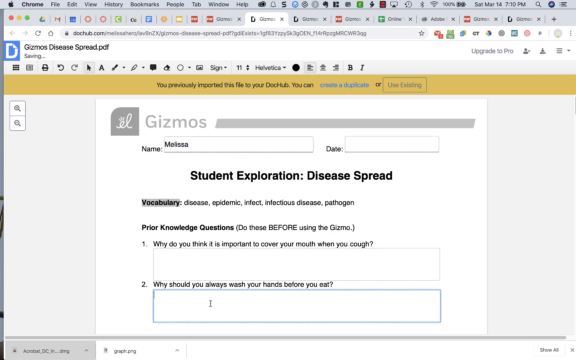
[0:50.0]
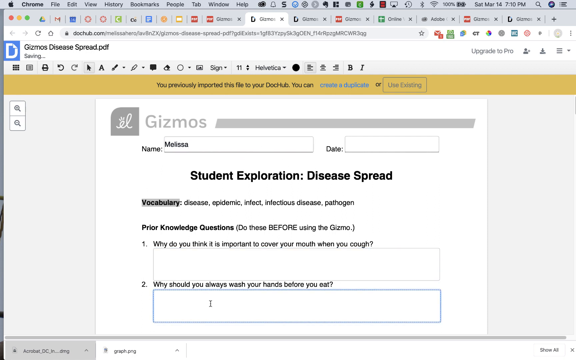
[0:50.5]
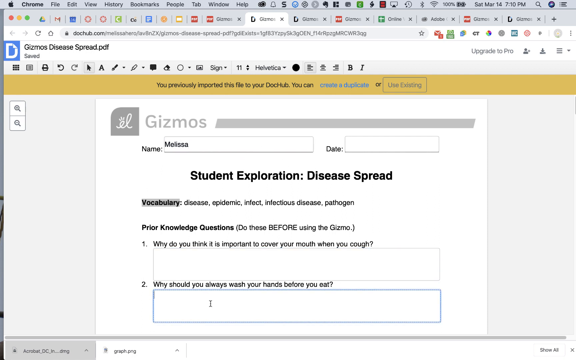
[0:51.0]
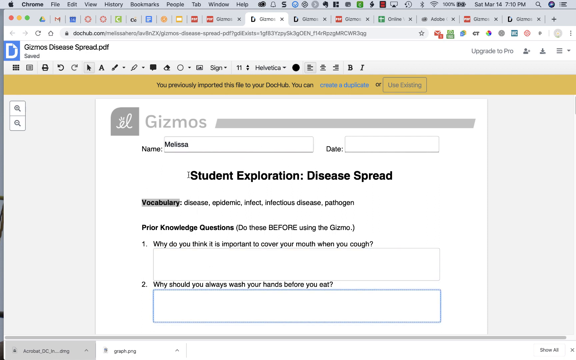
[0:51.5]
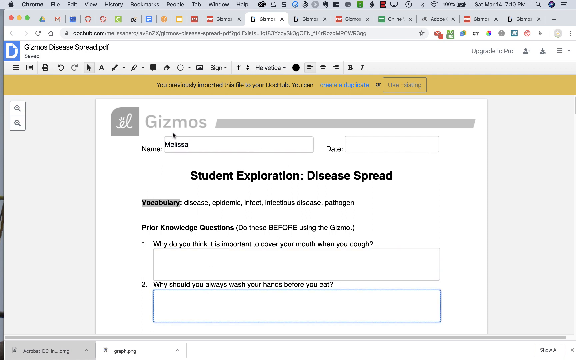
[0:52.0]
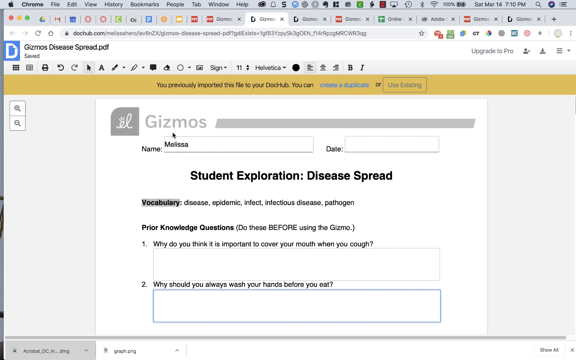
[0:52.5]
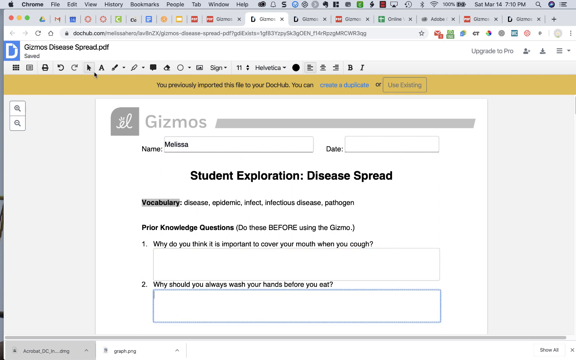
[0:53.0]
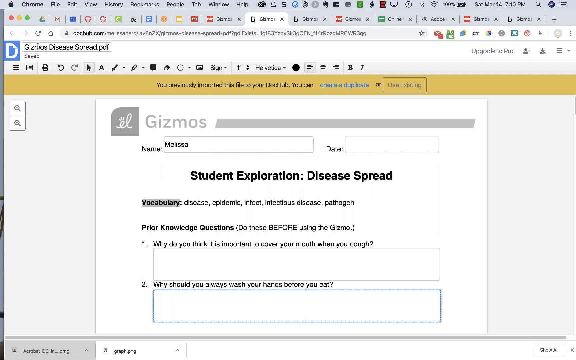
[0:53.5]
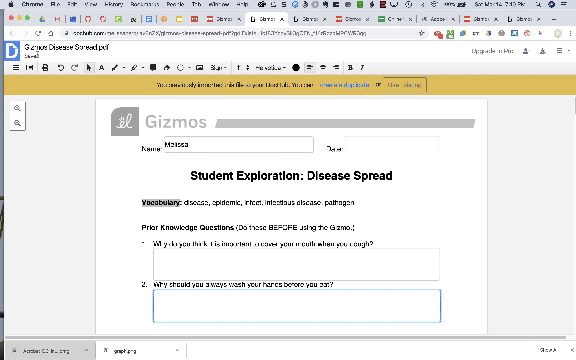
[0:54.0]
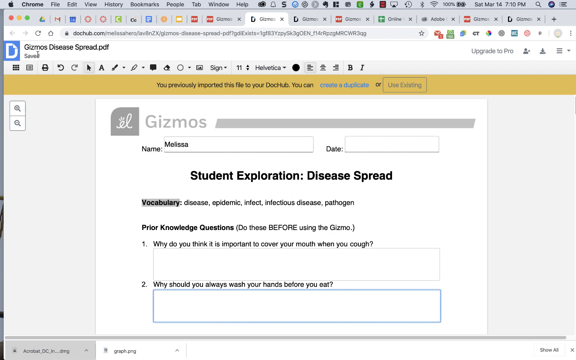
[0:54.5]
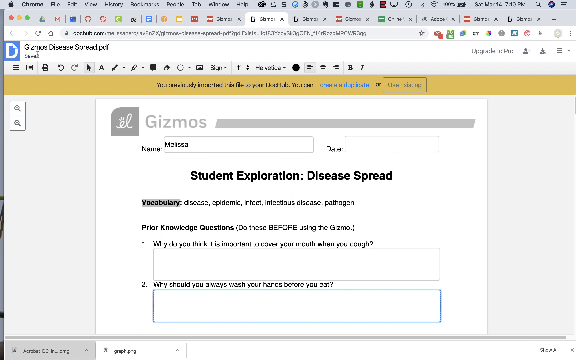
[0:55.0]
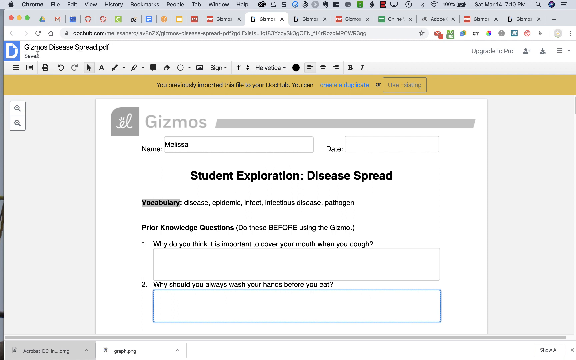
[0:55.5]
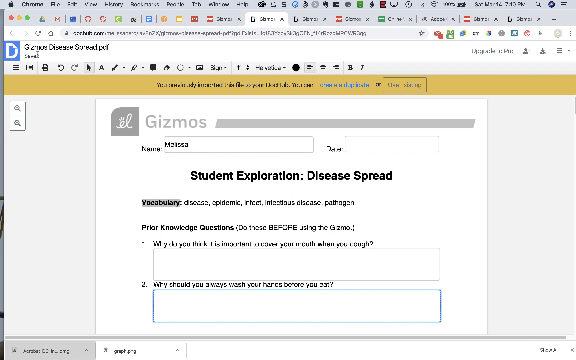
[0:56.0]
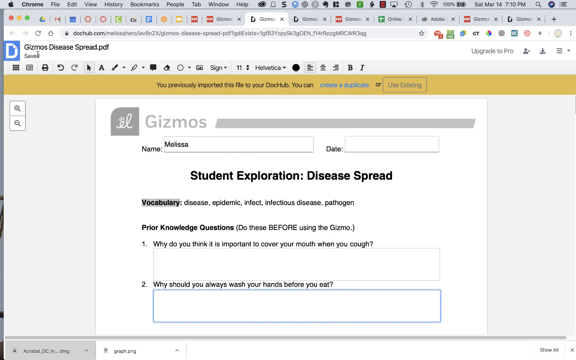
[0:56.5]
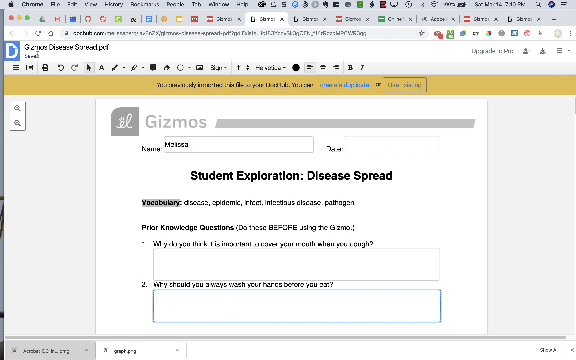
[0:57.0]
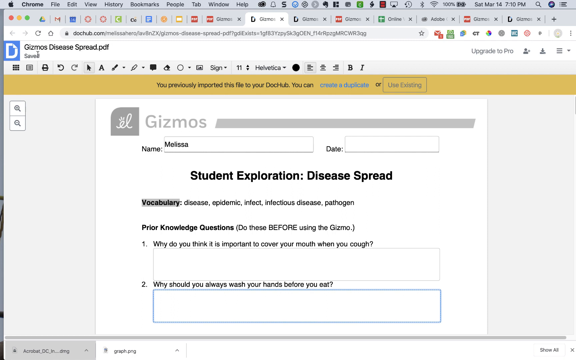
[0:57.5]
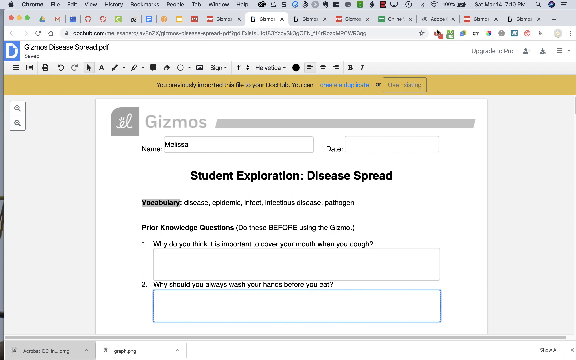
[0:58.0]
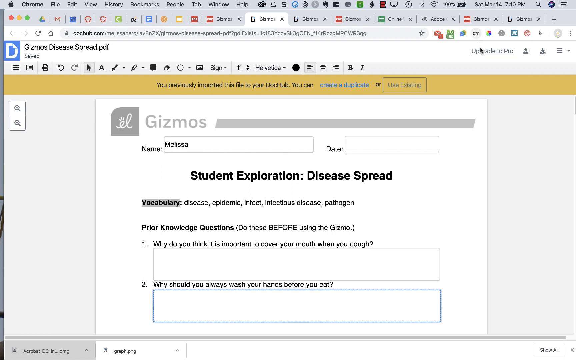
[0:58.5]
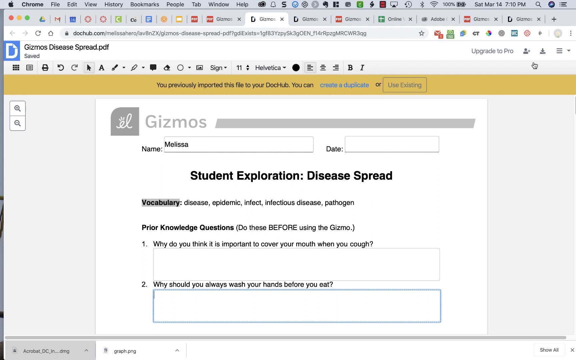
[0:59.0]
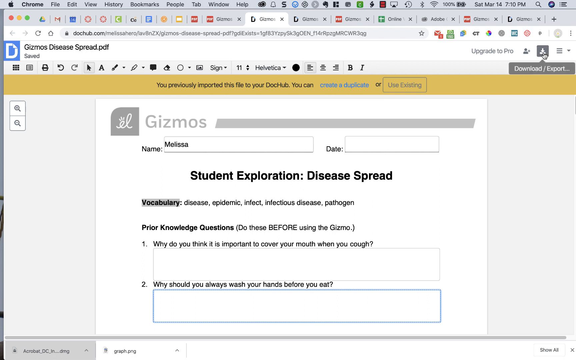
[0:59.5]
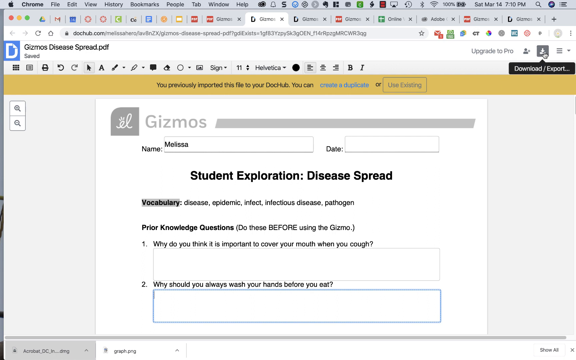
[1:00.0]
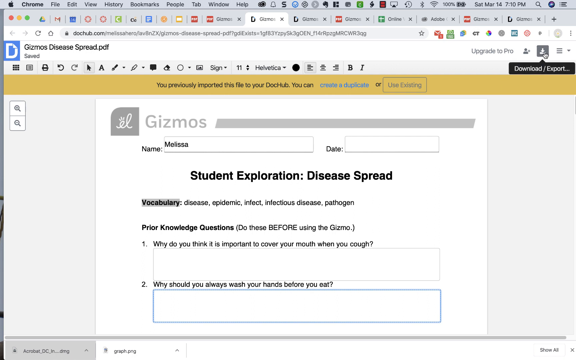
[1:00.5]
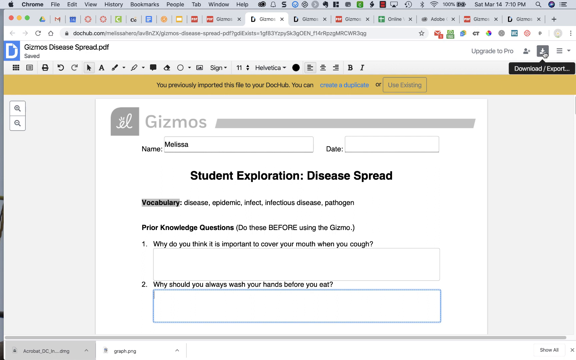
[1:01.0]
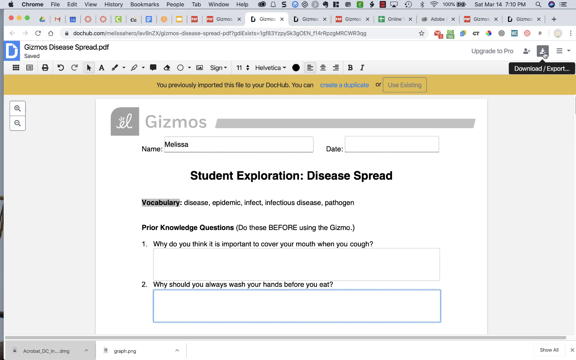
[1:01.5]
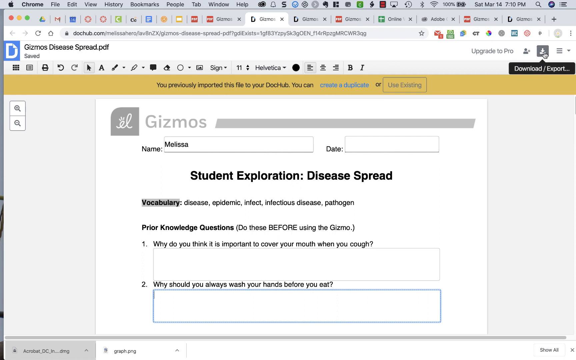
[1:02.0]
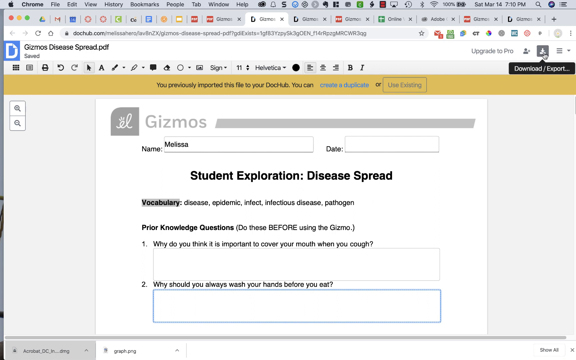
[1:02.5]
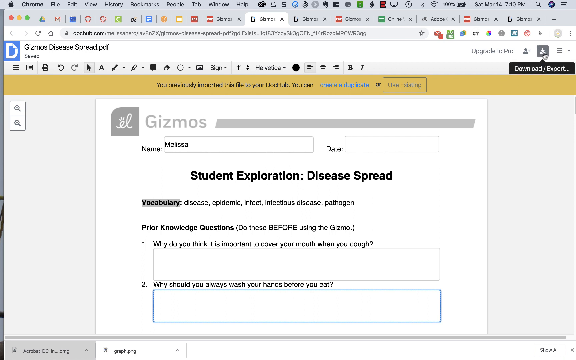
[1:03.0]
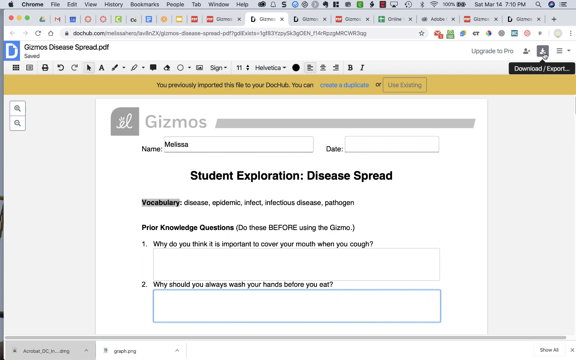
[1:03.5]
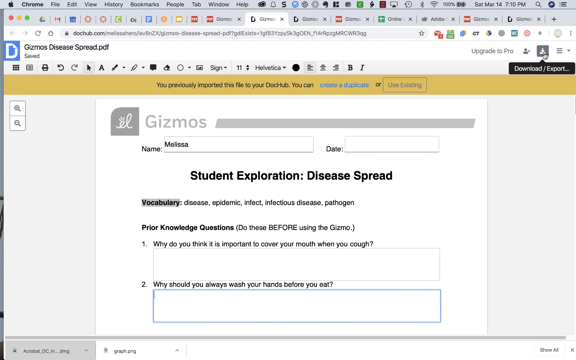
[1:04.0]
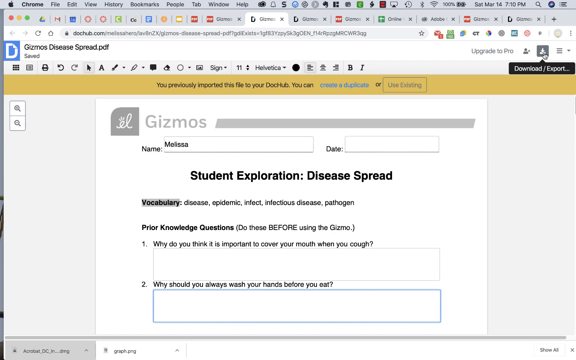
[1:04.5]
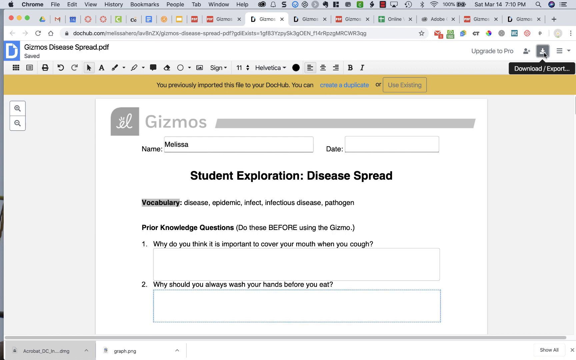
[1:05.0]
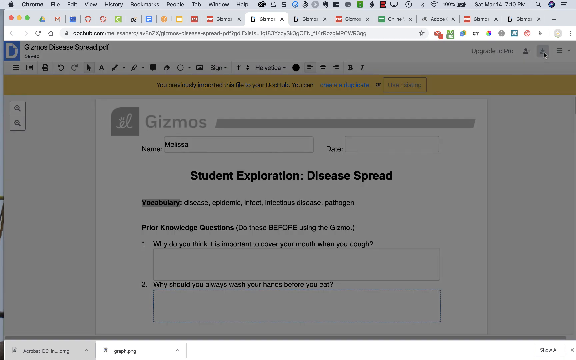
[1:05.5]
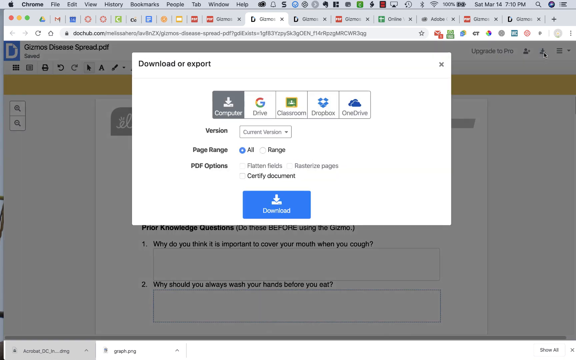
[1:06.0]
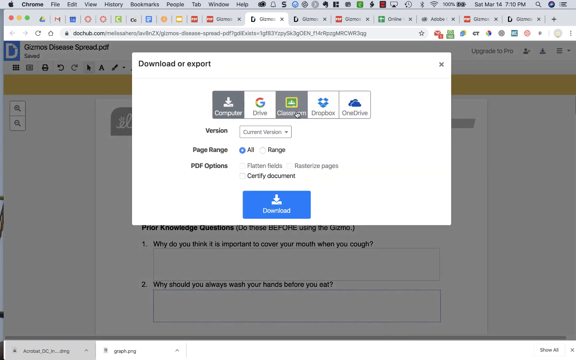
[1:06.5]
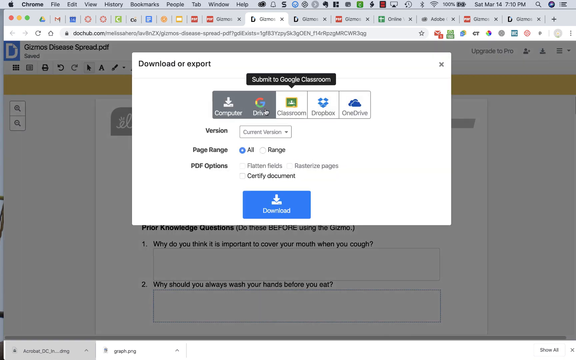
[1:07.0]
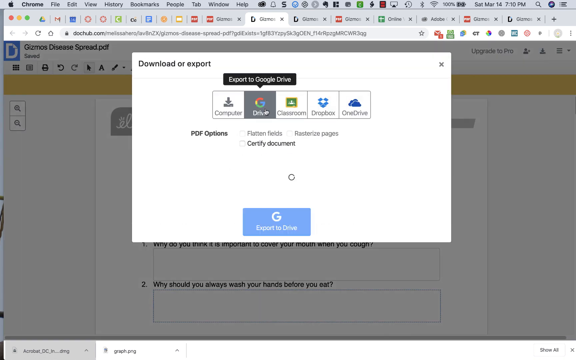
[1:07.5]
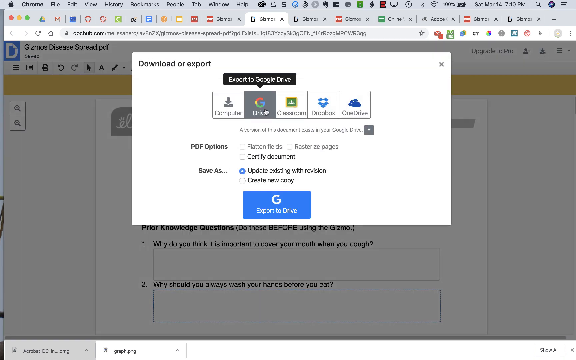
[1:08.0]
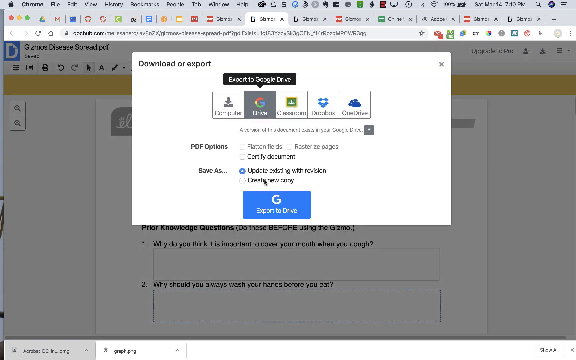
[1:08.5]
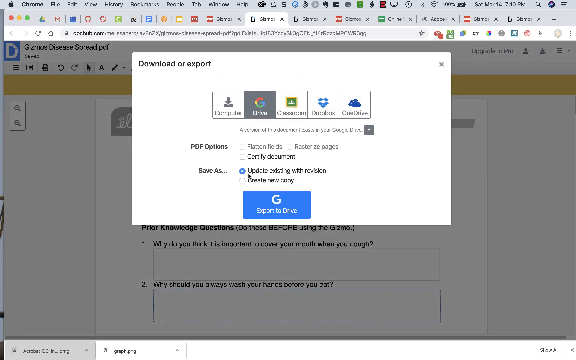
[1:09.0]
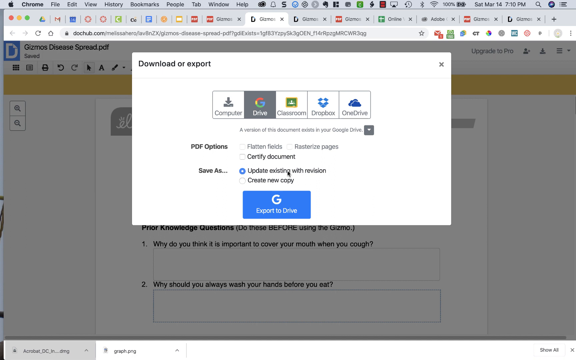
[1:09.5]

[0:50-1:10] An application for dochub.com shows gizmosdiseasespread.pdf. The name field has "Melissa" typed in, and the date box is blank. Text on the page says "student exploration disease spread. Vocabulary, disease, epidemic, infect, infectious disease, pathogen, prior knowledge questions. Do these before using the gizmo. One, why do you think it's important to cover your mouth when you cough? And two, why should you always wash your hands before you eat?" The cursor is clicked into box two. The user moves the mouse up to the gizmos tab, then up to where it says "saved," then over to the download export button and clicks it. A screen titled "Download or Export" appears, with options to download to computer, Drive, Classroom, Dropbox, or OneDrive, and options to select the version, the page range, and PDF options. The user clicks Drive, which shows additional settings such as PDF options and Save As, and hovers over the section that says "Update Existing with Revision."